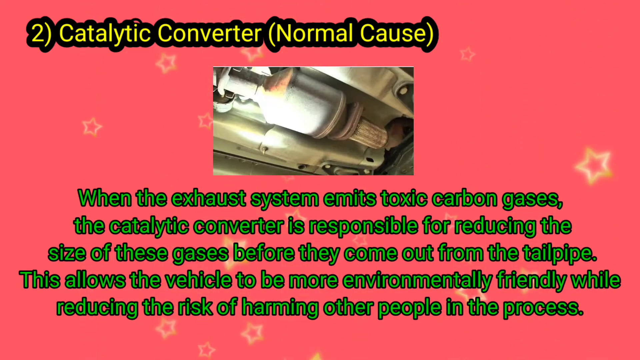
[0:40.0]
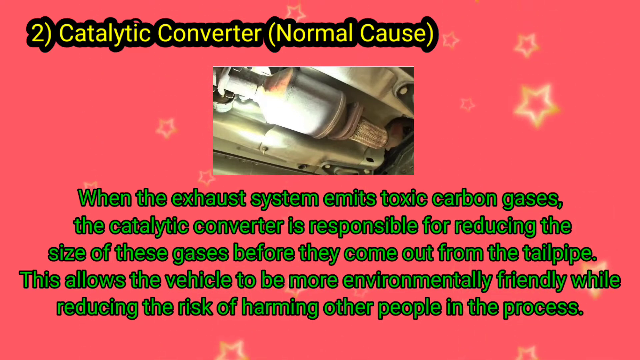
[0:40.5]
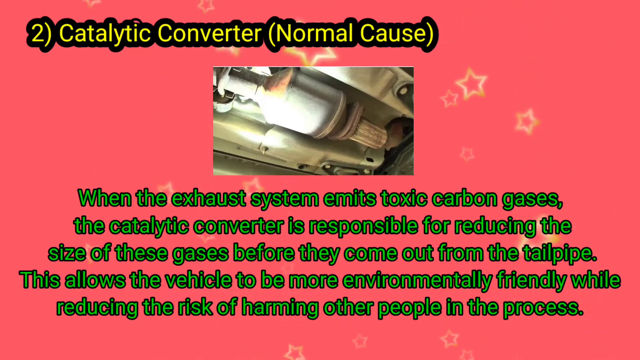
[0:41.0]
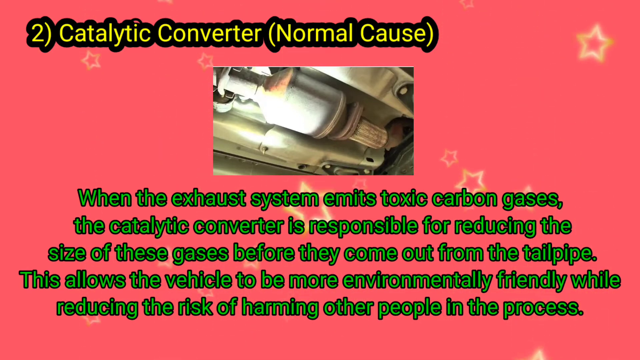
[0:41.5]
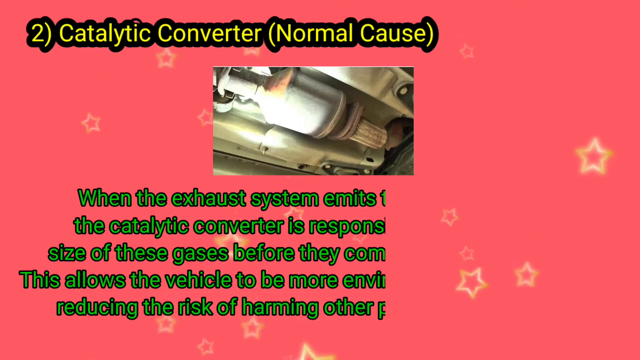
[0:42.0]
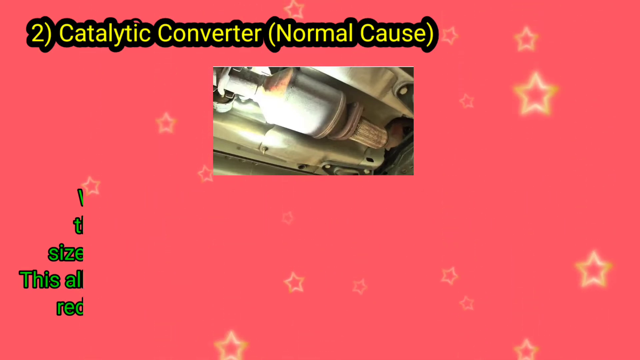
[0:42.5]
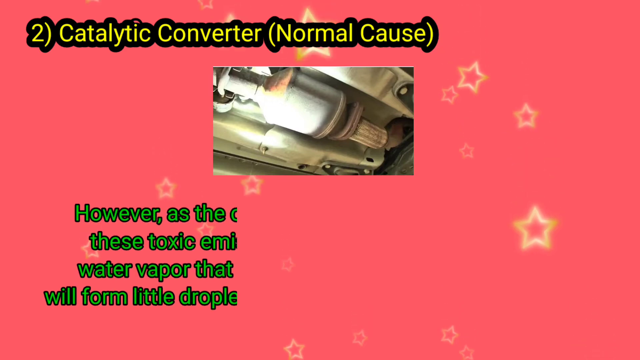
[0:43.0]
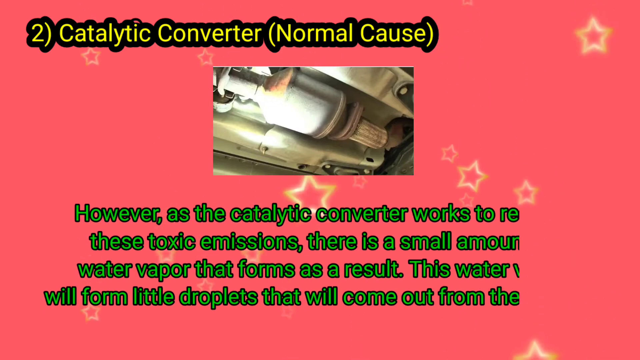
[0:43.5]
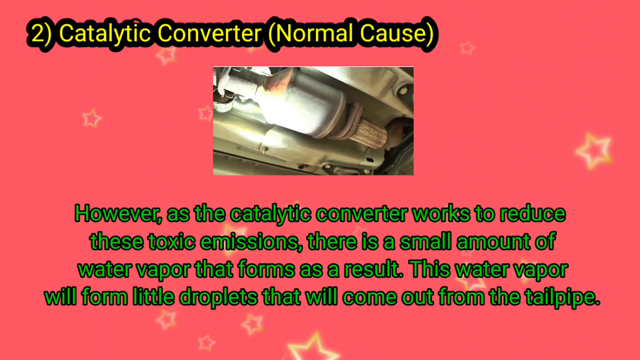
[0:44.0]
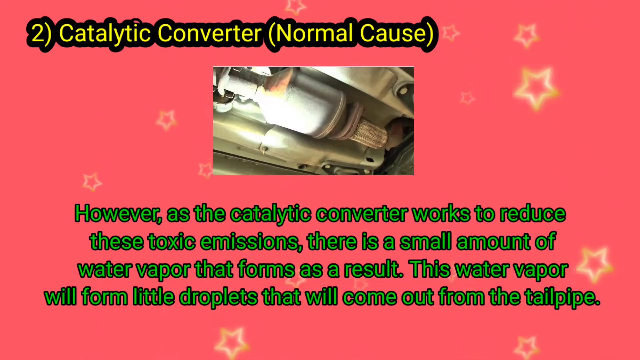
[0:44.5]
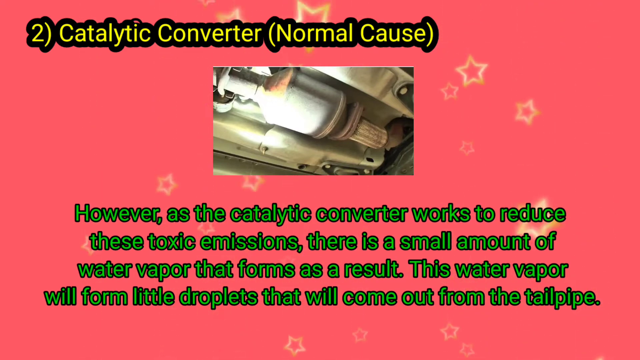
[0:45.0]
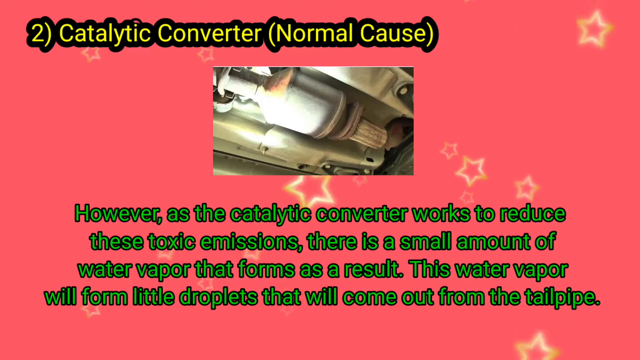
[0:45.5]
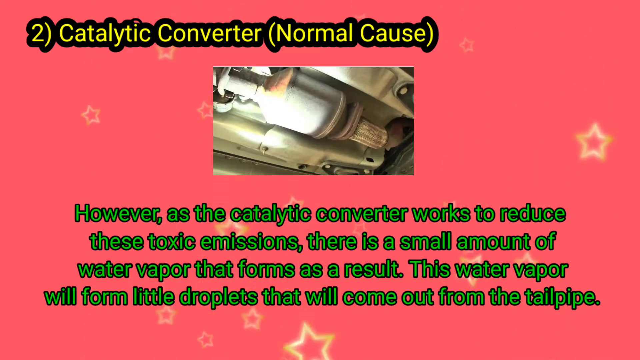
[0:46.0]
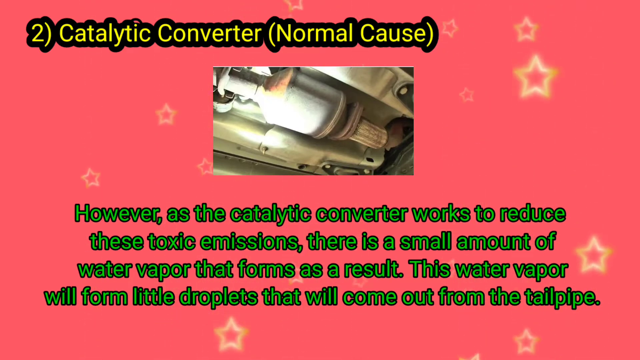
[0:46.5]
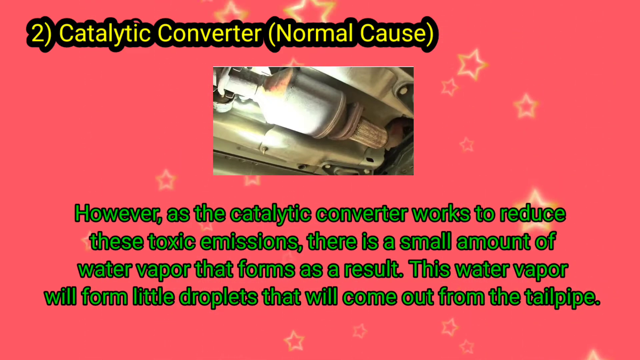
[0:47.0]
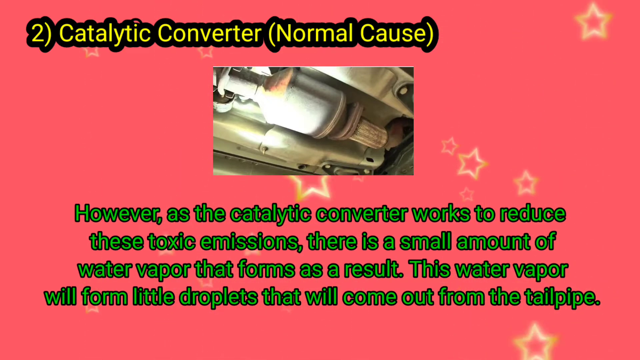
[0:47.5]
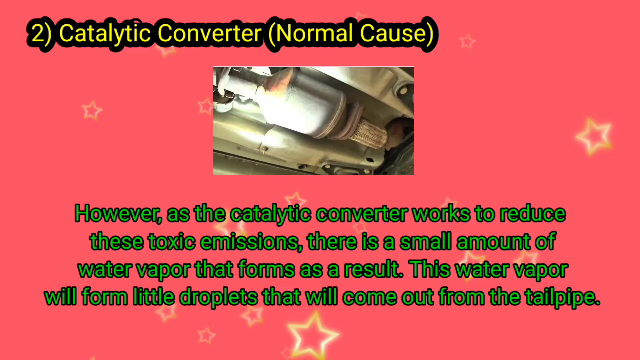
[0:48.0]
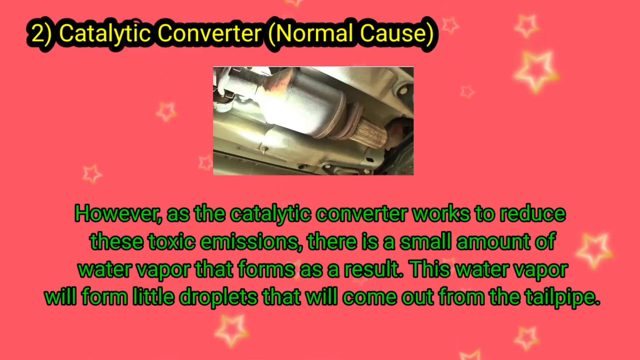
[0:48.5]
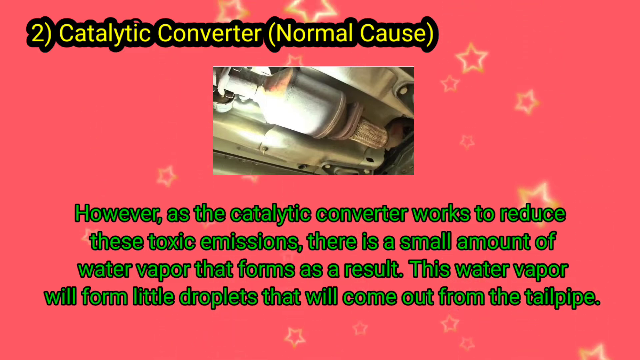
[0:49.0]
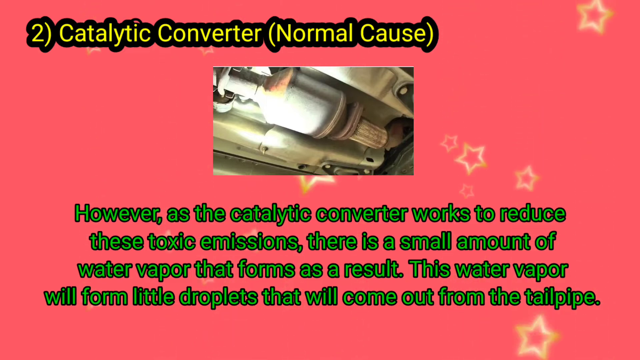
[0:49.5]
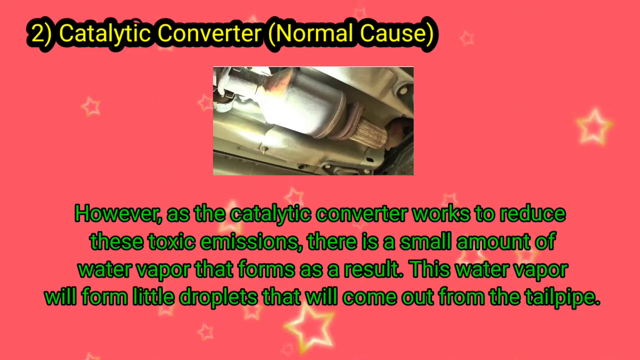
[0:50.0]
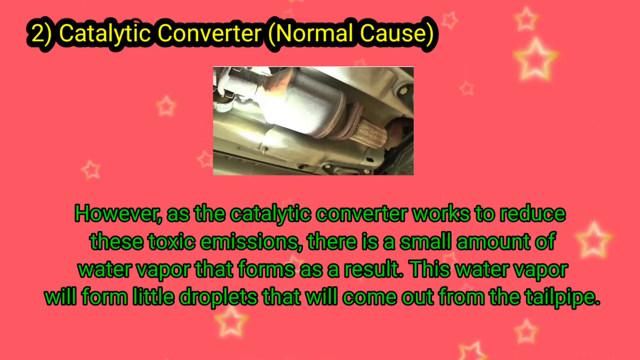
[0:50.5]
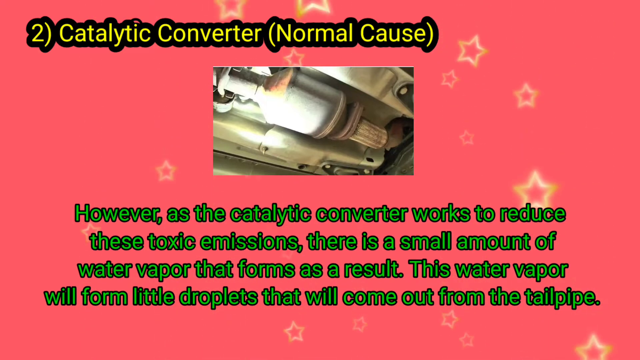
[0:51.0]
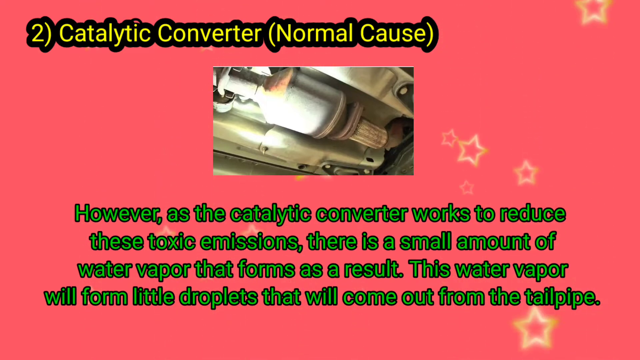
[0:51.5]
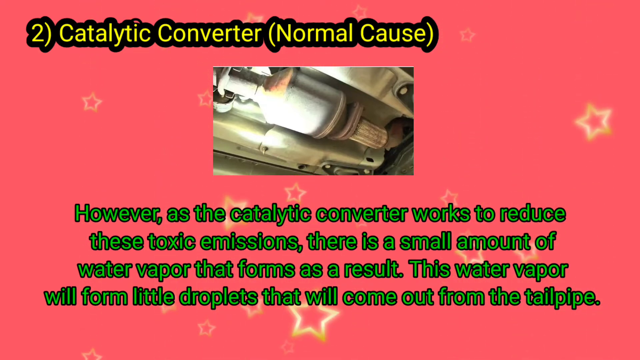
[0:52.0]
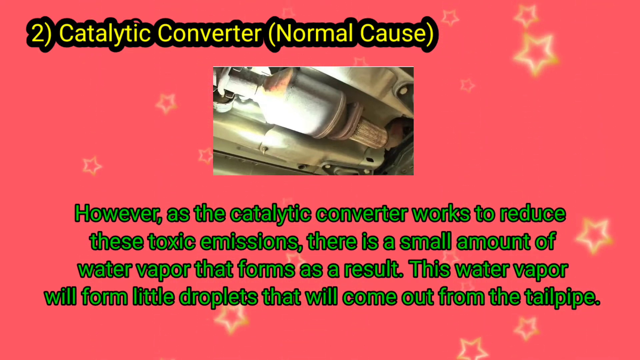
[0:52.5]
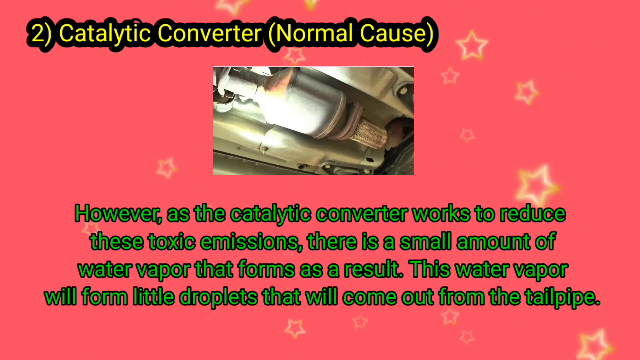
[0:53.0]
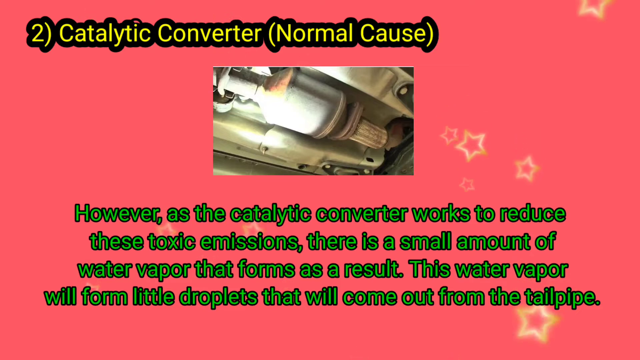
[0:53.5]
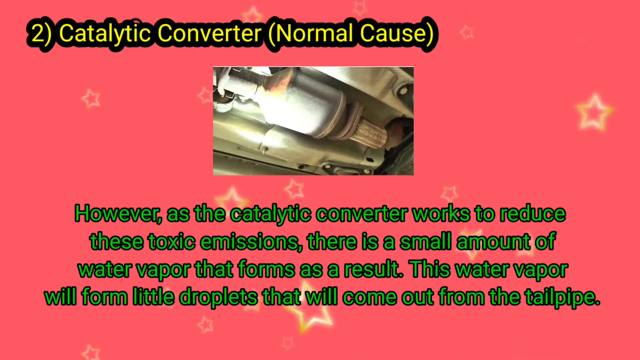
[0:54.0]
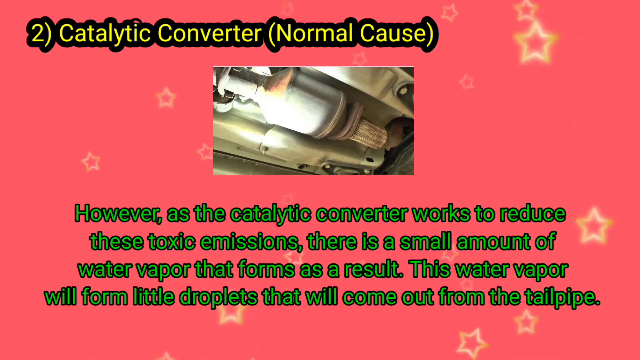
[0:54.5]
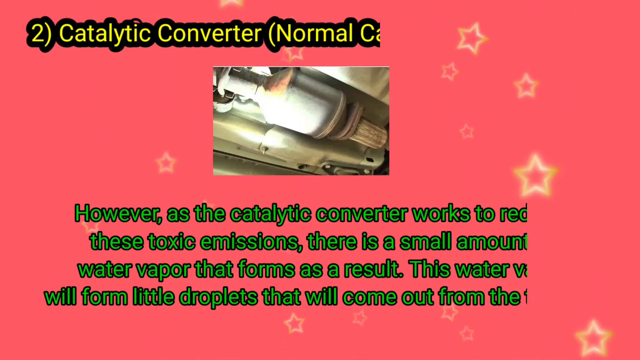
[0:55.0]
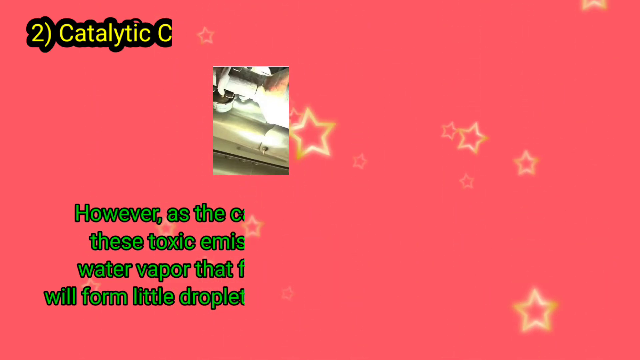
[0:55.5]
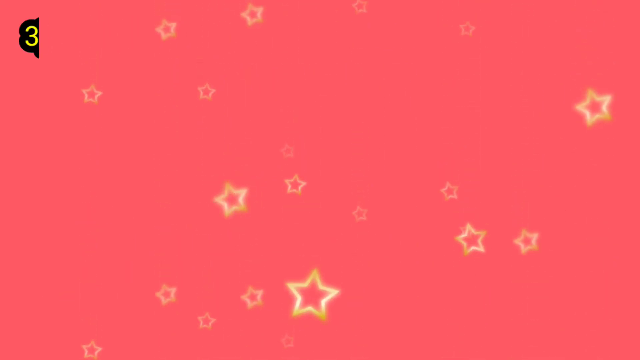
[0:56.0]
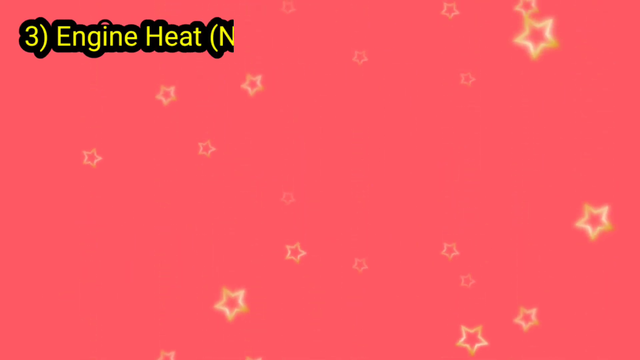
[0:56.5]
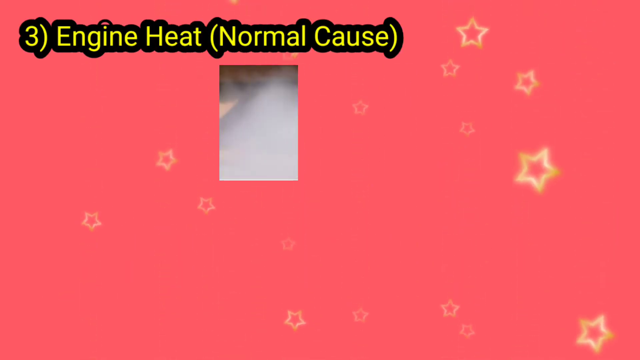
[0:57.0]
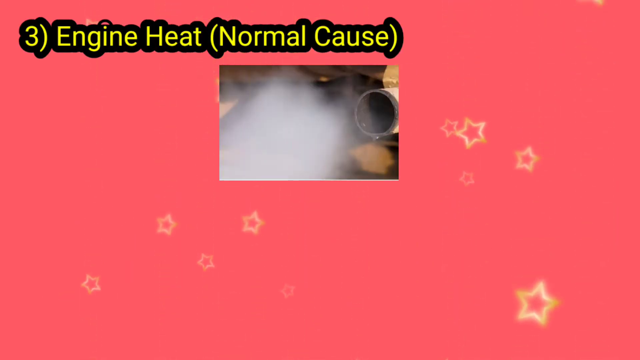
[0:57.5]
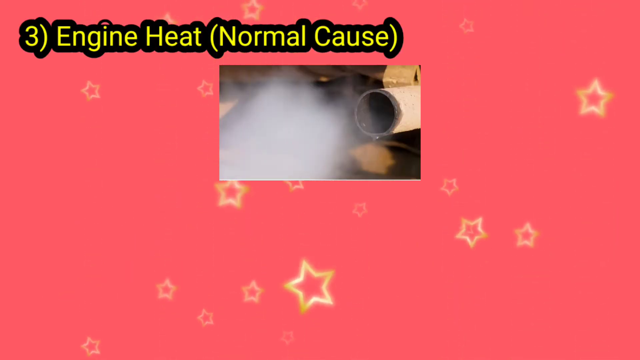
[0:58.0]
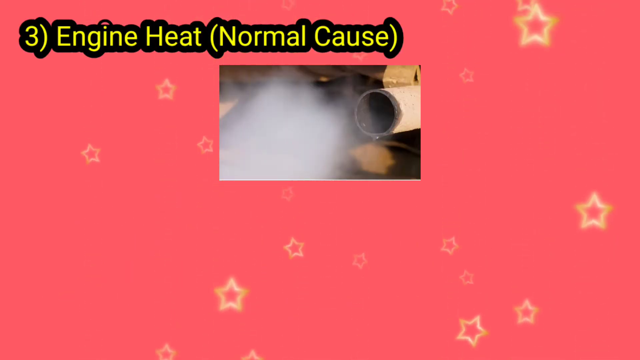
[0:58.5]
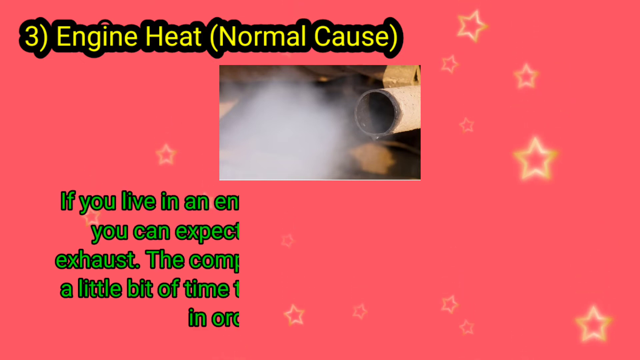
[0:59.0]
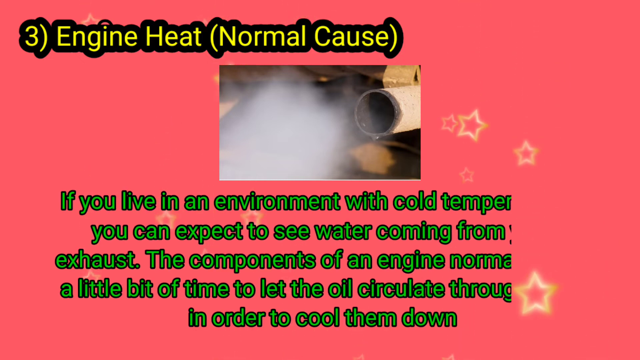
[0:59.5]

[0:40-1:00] Yellow stars fall over a pink background. The center photograph shows a gray catalytic converter underneath a car body. Yellow lettering at the top left reads "two catalytic converter normal cause", and green lettering underneath reads "however, as the catalytic converter works to reduce these toxic emissions, there is a small amount of water vapor that forms as a result. This water vapor will form little droplets that will come out from the tailpipe." The lettering then changes: yellow text at the top reads "engine heat, normal cause". A beige pipe is on the right side, with some white-grayish smoke in the center. Green lettering below reads "if you live in an environment with cold temperatures, you can expect to see water coming from your exhaust. The components of an engine normally need a little bit of time to let the oil circulates through them in order to cool them down."